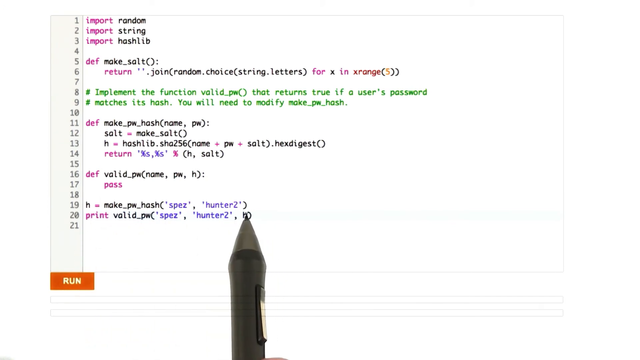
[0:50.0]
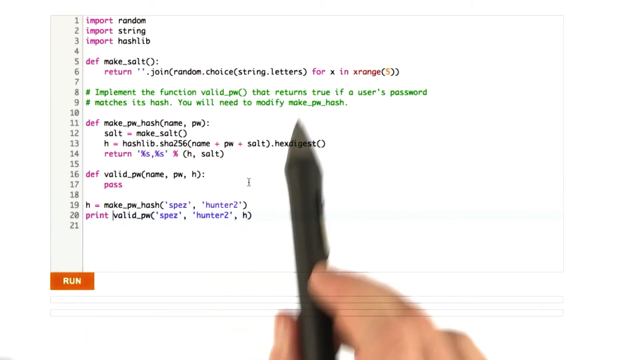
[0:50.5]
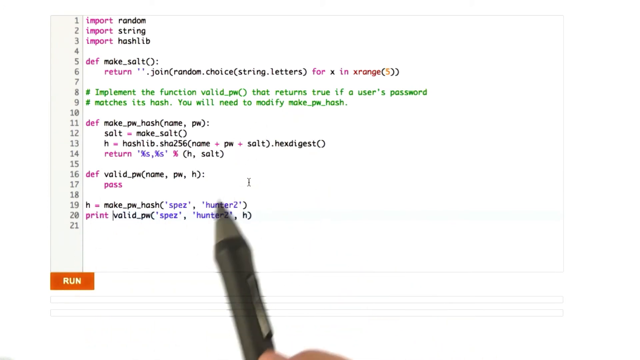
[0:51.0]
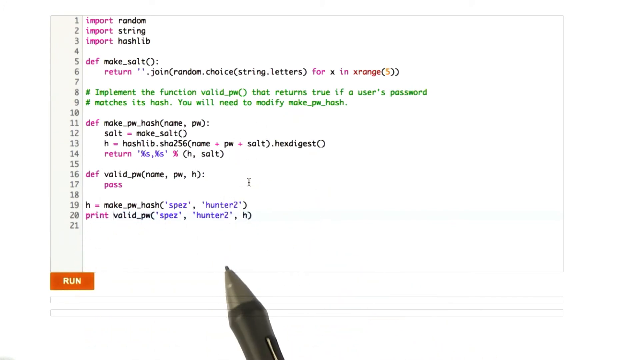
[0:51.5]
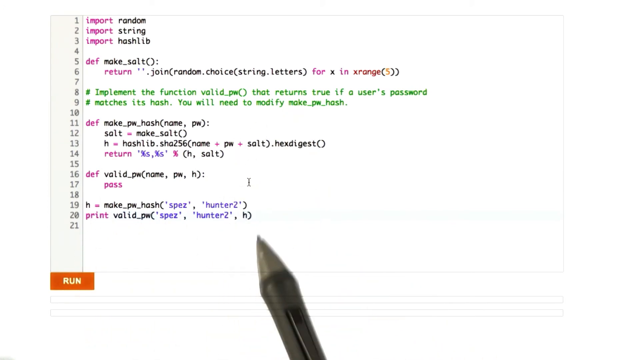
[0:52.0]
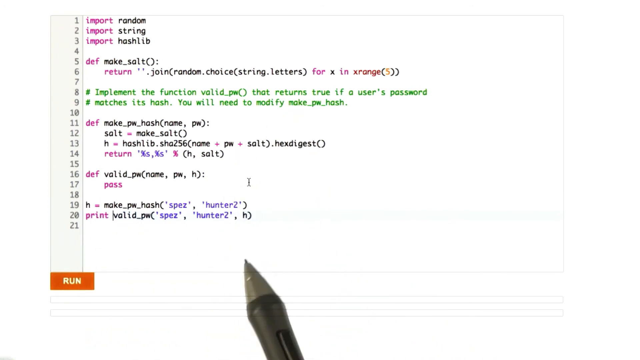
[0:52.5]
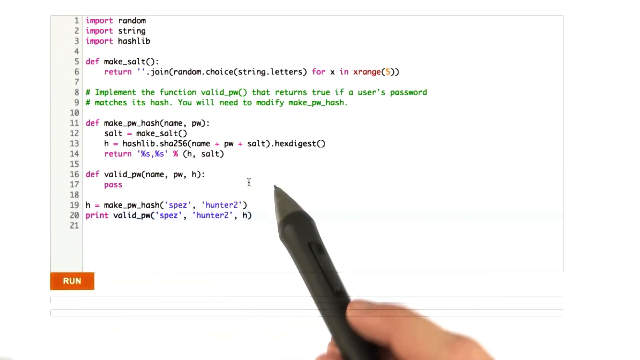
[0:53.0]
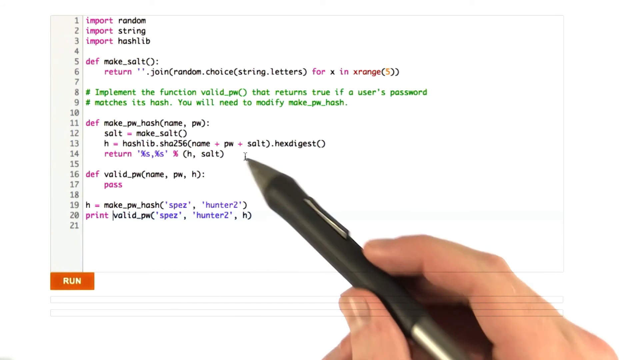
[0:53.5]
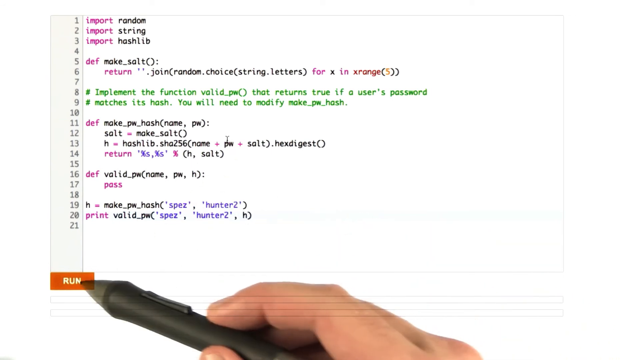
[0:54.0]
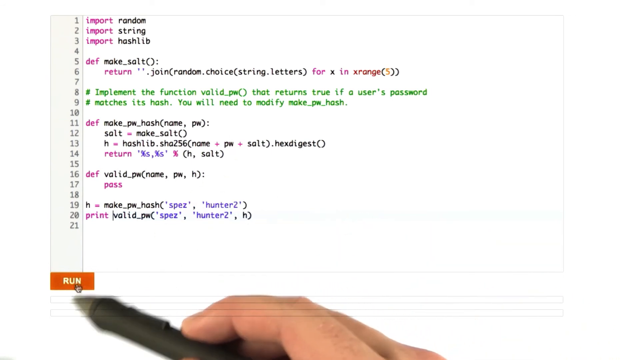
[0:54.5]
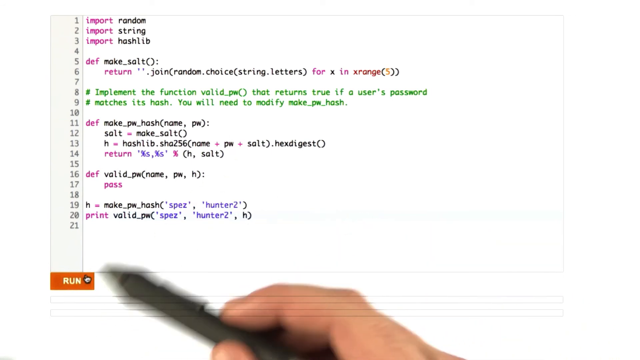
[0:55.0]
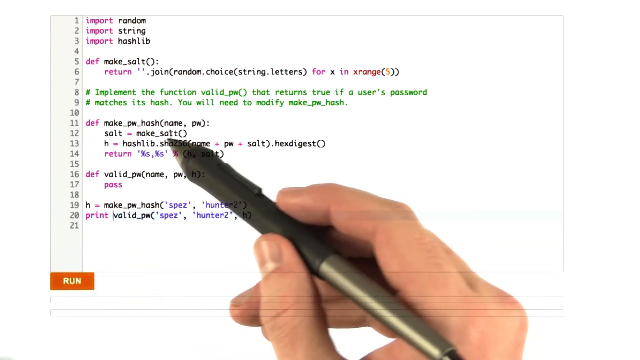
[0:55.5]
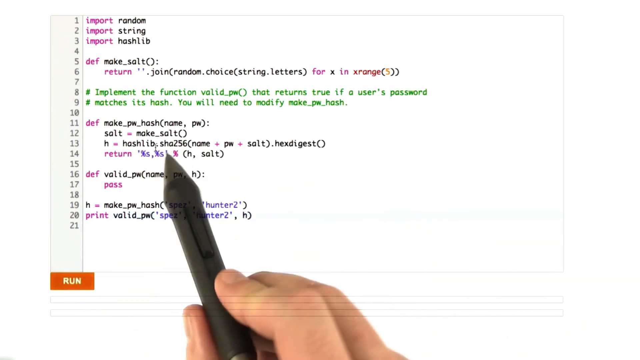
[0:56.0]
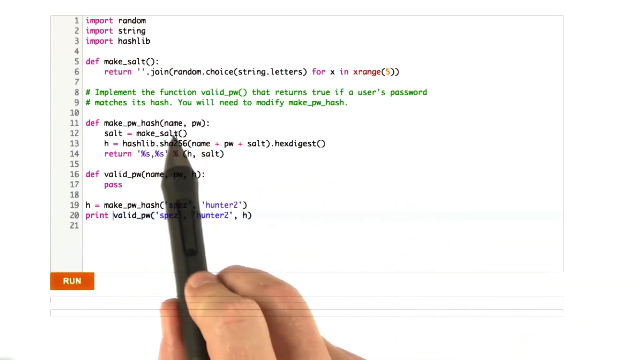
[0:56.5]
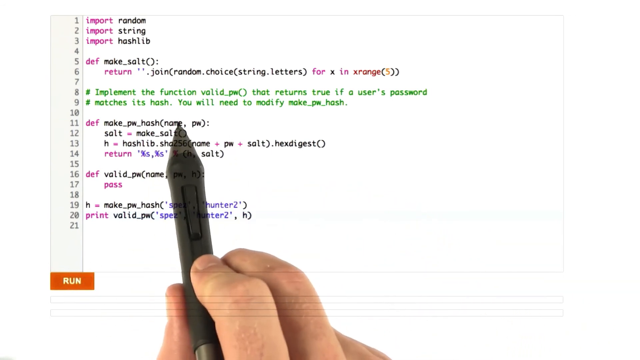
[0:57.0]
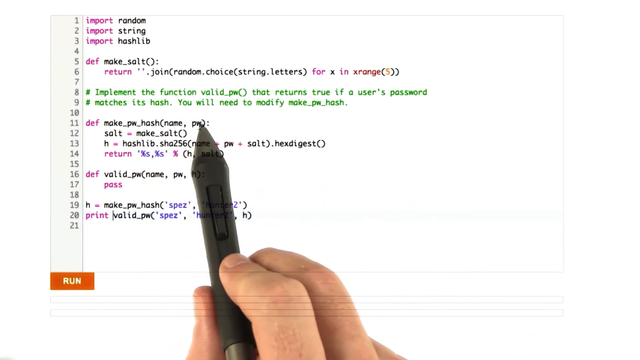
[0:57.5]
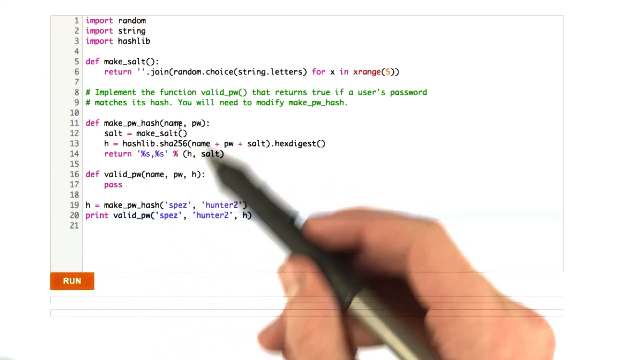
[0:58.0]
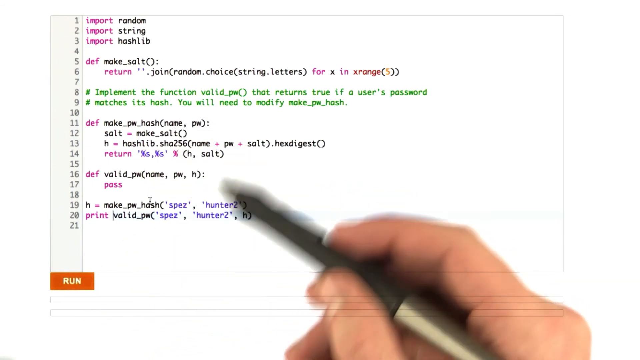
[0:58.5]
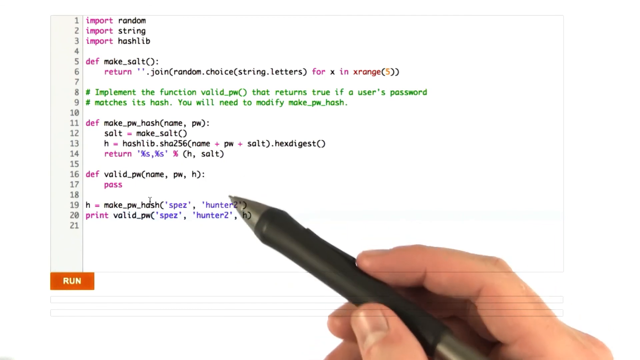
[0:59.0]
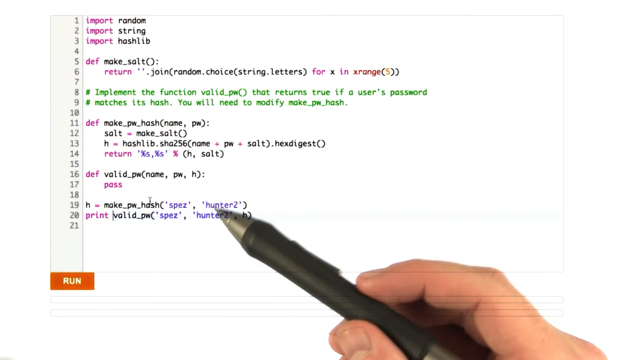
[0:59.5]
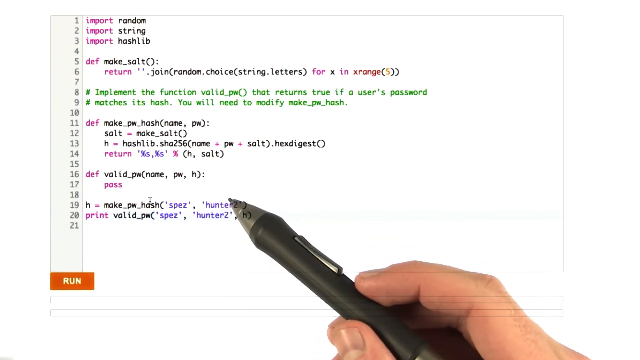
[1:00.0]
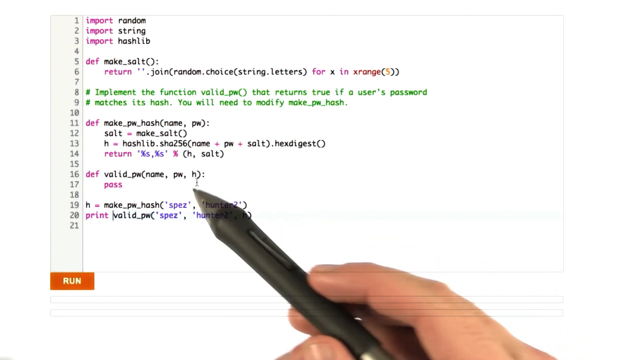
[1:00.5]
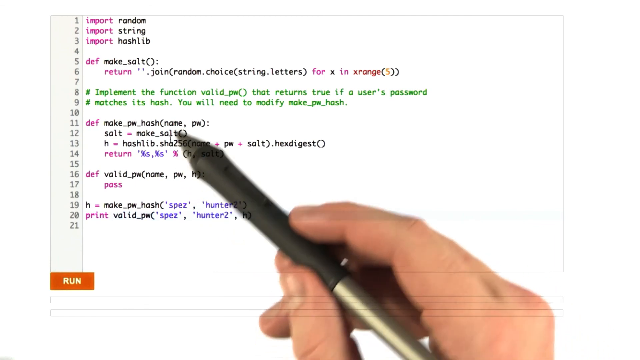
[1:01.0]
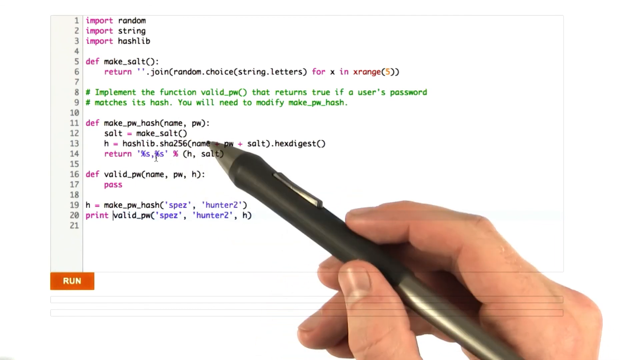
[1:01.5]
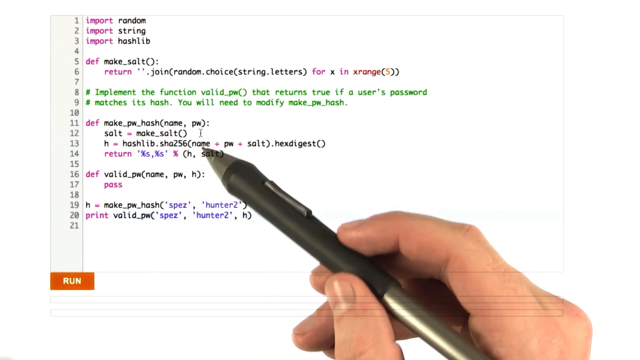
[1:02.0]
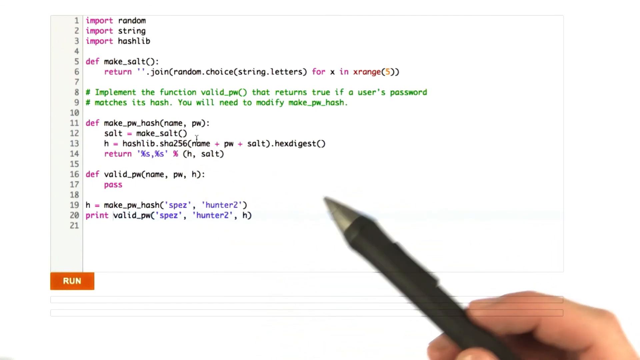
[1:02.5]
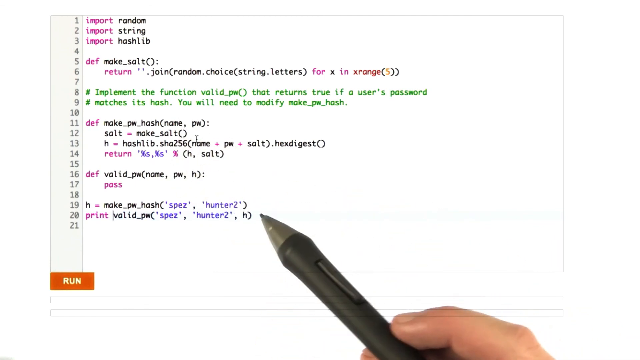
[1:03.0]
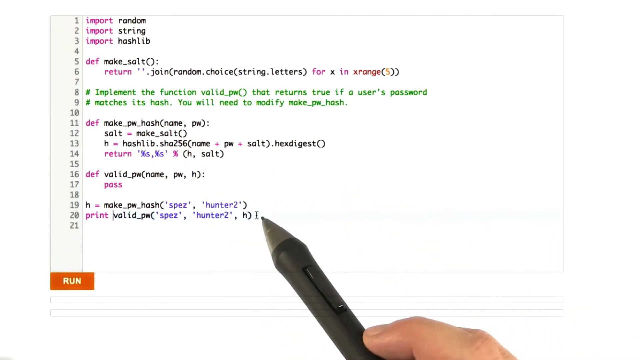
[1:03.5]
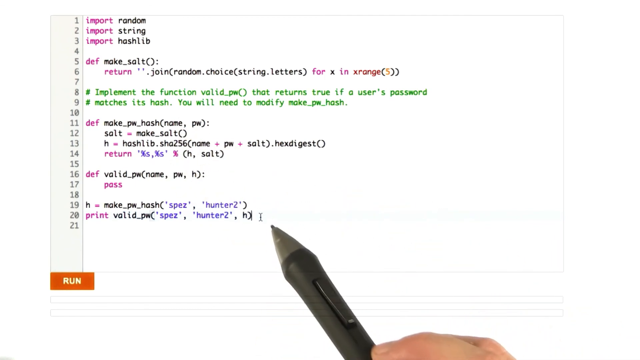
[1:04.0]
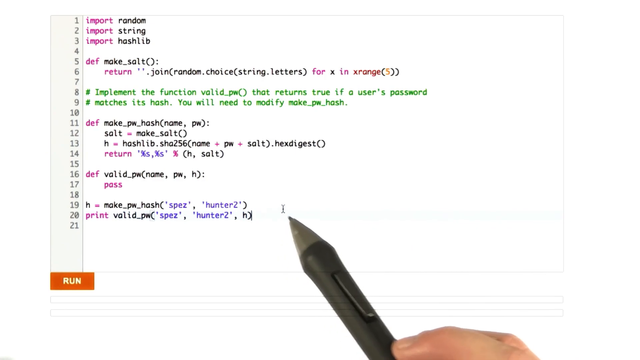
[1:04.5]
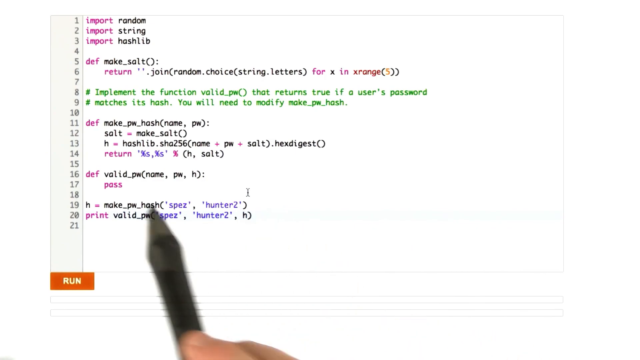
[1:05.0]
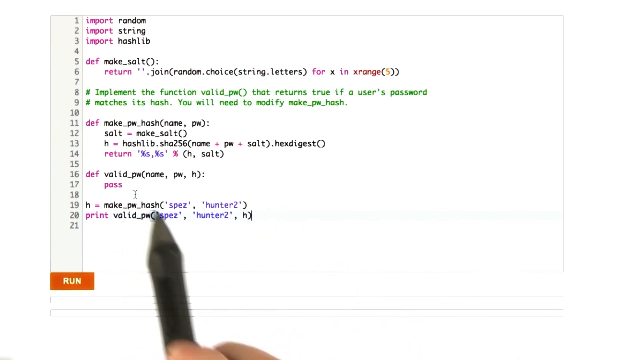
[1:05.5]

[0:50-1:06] The code being written looks complicated, with words and characters included in it. A person's hand holds a black pen and shows where to type and what to type to make the program run. There is a lot of pointing to the board.